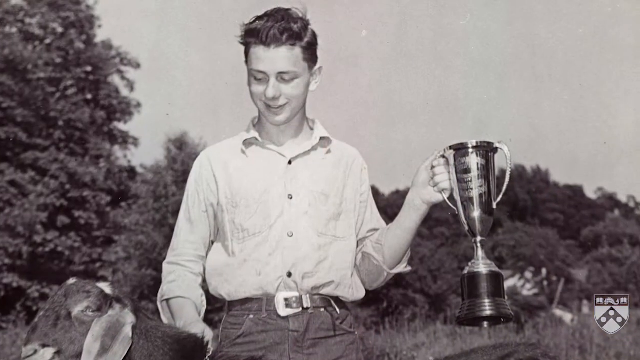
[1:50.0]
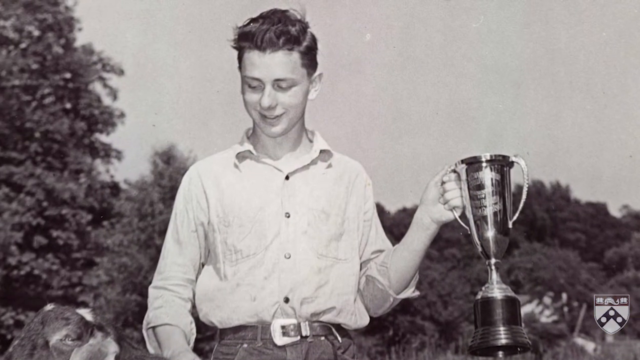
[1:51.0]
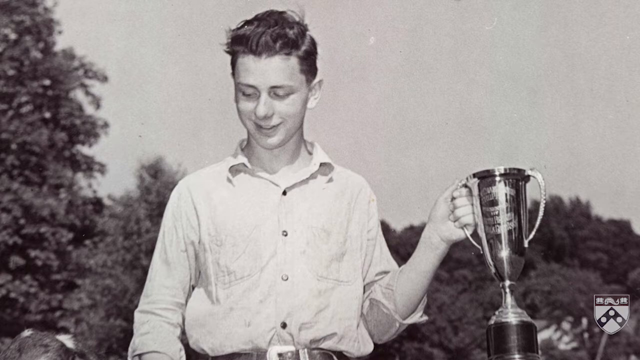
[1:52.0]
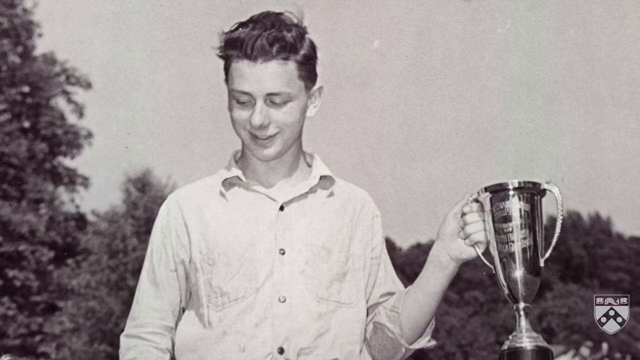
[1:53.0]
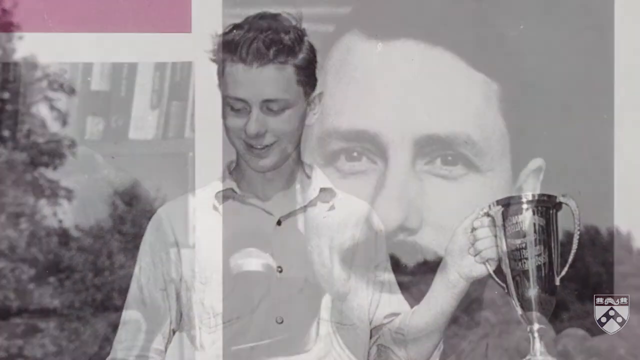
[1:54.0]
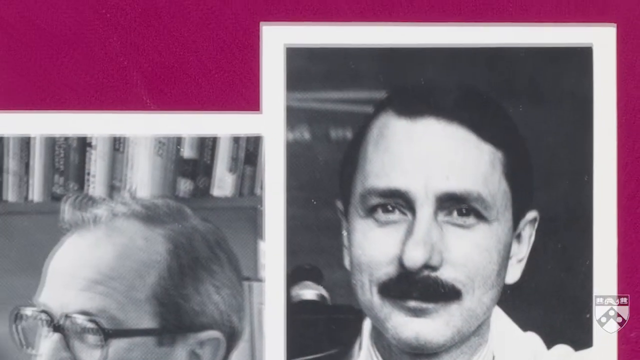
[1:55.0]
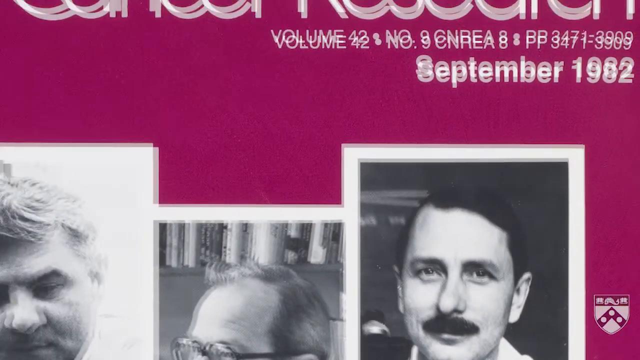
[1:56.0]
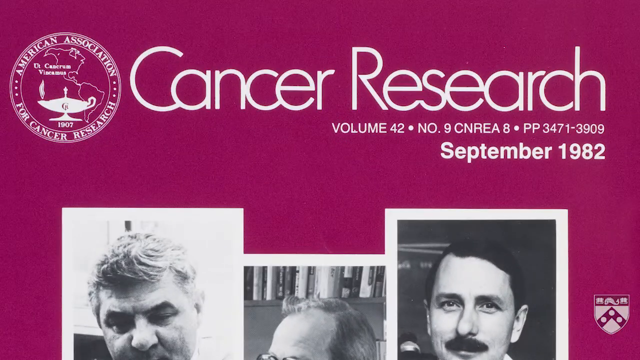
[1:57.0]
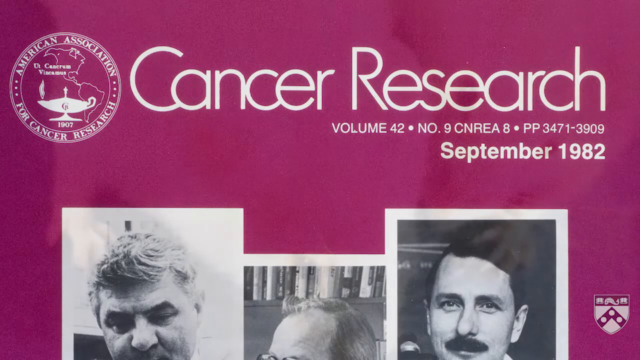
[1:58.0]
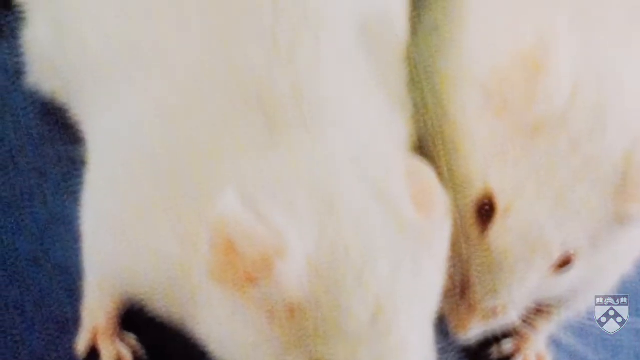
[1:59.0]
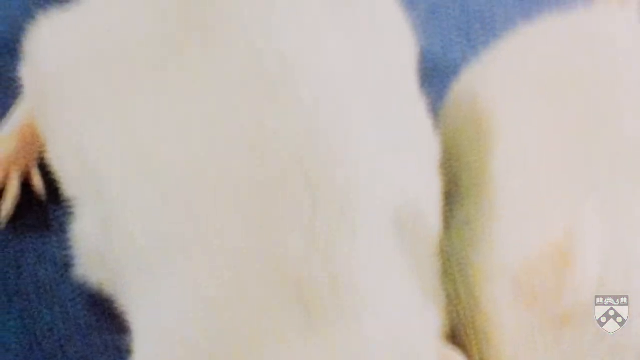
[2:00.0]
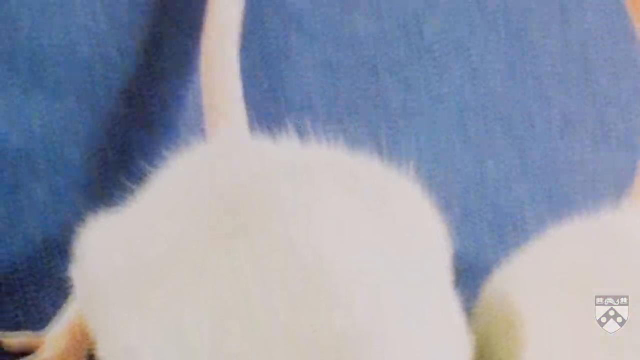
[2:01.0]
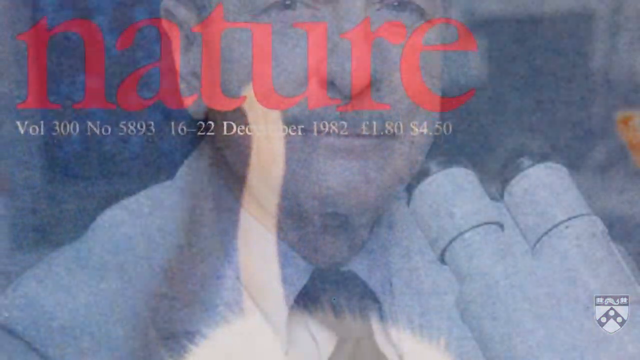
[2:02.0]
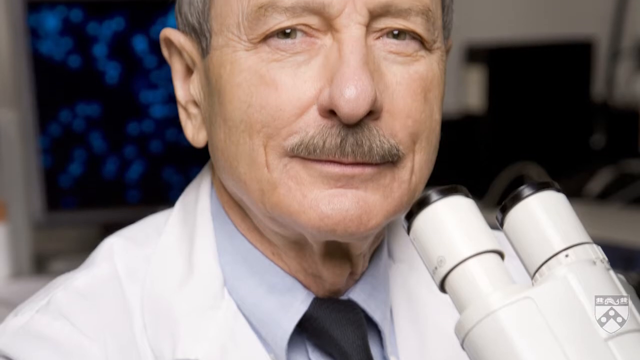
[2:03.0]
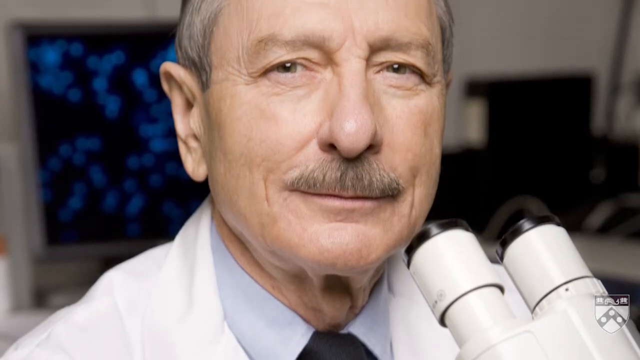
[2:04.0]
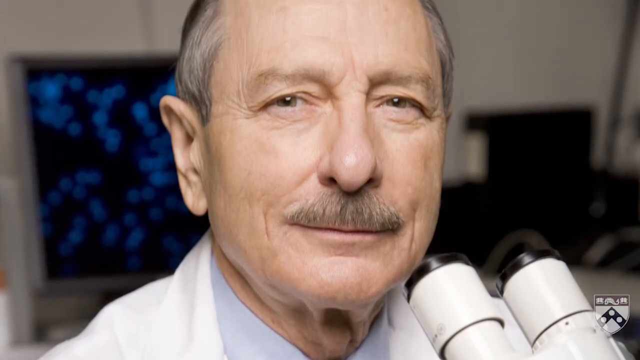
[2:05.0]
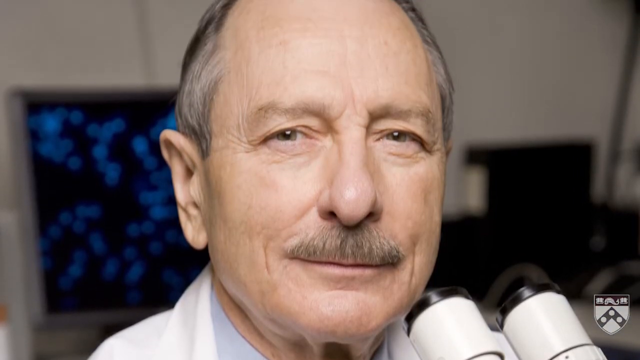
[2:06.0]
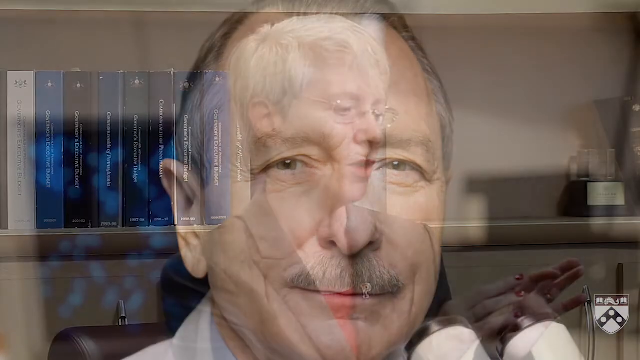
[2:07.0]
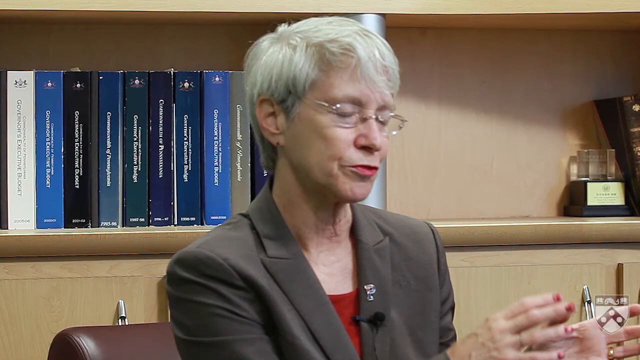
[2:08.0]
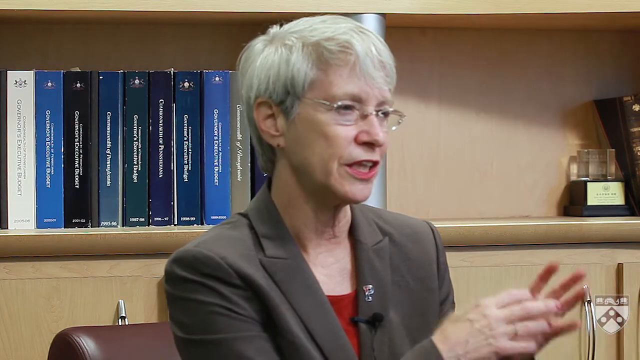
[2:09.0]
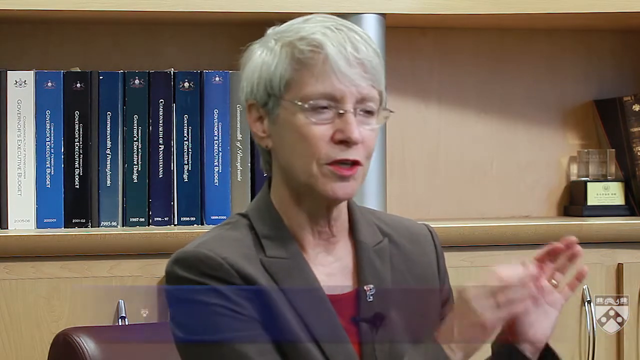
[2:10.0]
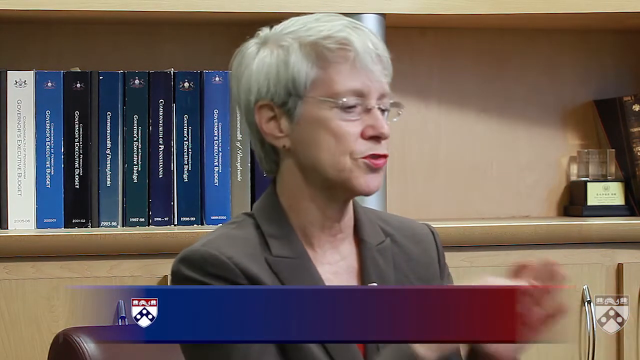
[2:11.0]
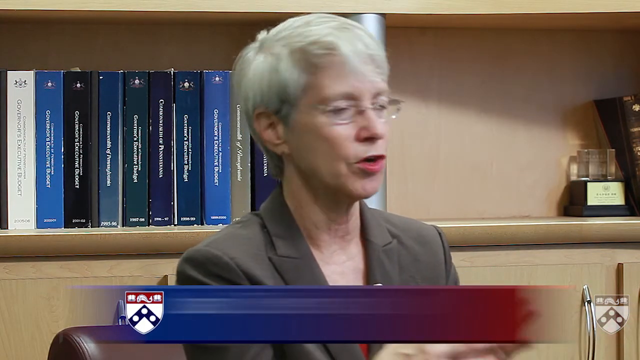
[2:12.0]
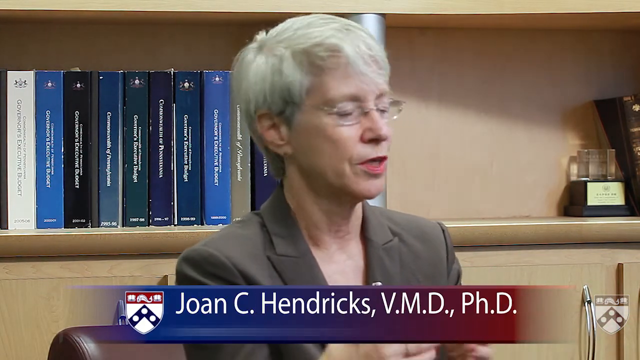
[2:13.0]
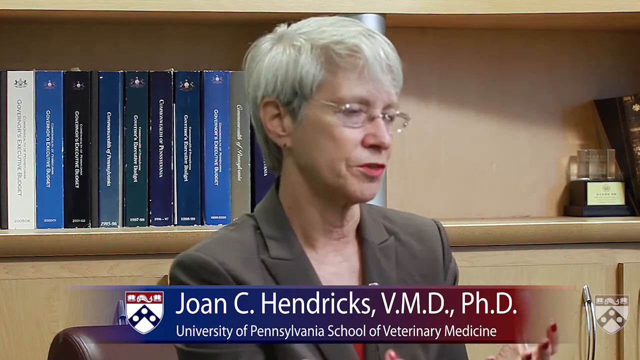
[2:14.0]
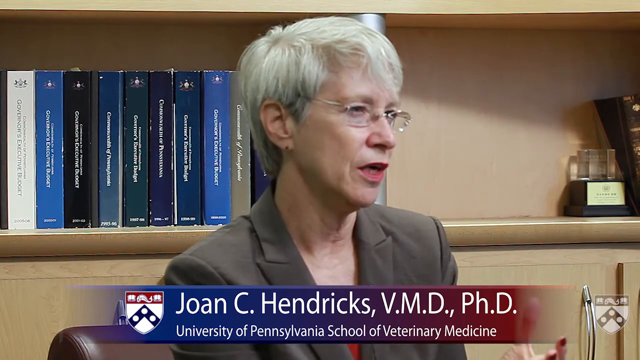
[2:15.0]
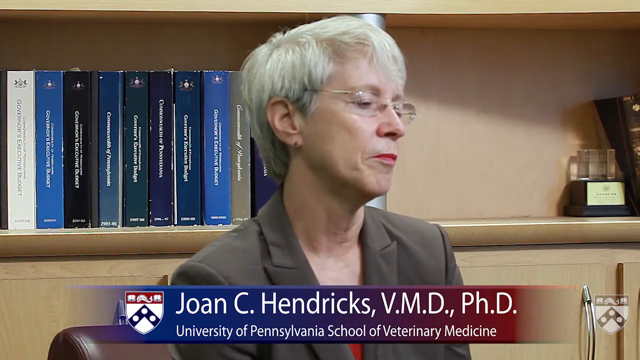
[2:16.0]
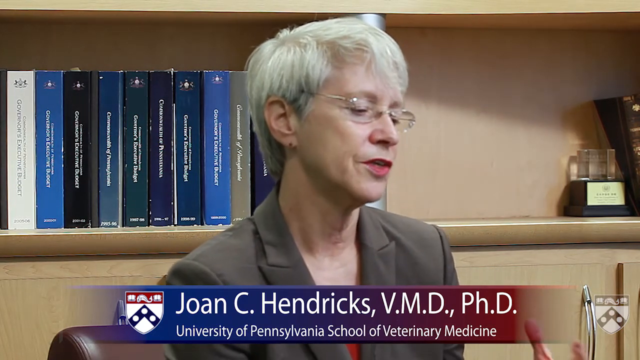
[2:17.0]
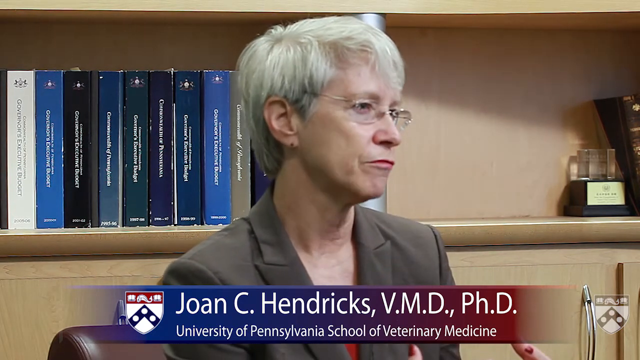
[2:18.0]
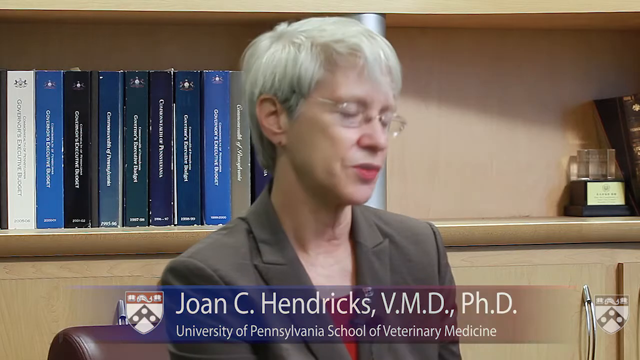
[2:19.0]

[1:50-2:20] A man is shown in black and white; he looks young, possibly even a boy. Next comes a journal on cancer research reading "volume 42, number 9CNREA8" and "PP3471-3909," dated September 1982, with pictures of researchers on the front. White mice with long pink tails follow. Then a scientist, a man with a grayish mustache in a lab coat, sits in front of a microscope with eyepieces for both eyes. The woman is shown turned toward the right, and her name appears again: "Joan C. Hendricks, VMD, PhD, University of Pennsylvania School of Veterinary Science." As she talks, she often moves her hands.